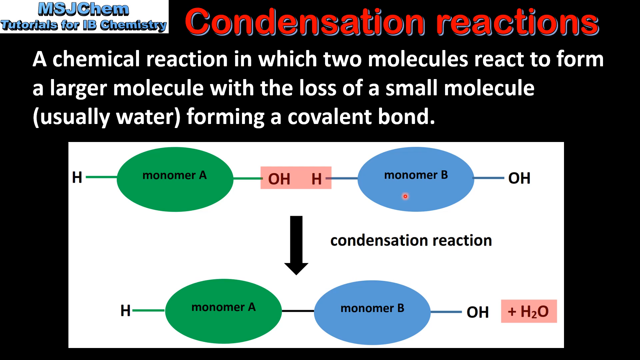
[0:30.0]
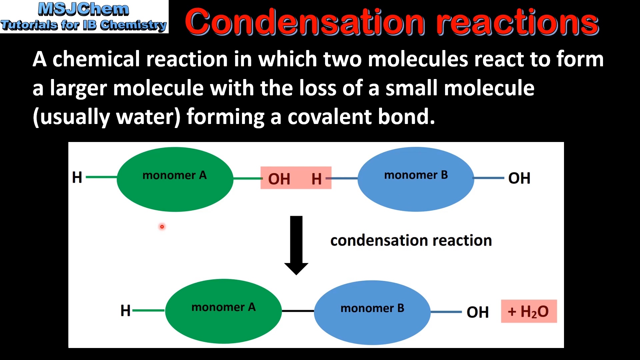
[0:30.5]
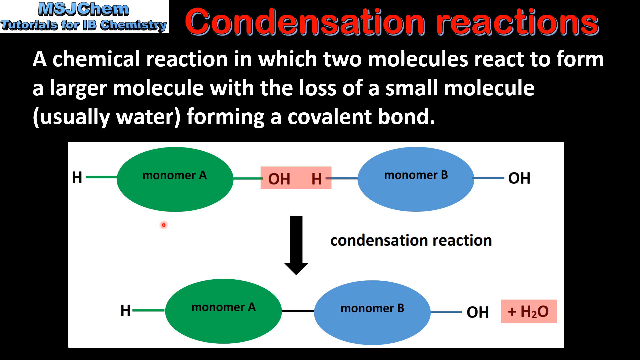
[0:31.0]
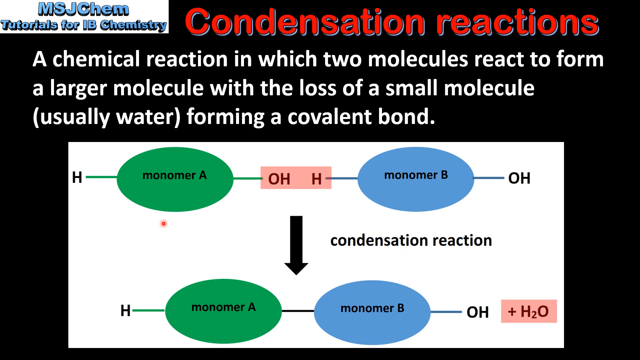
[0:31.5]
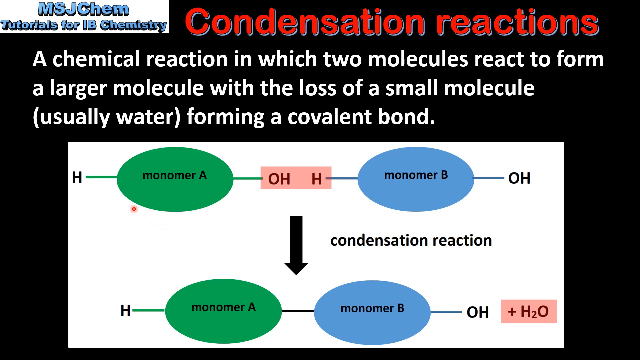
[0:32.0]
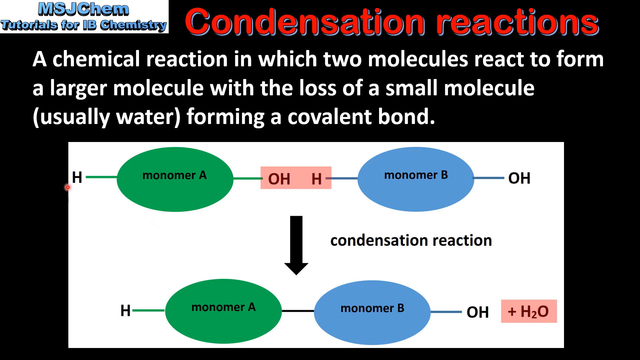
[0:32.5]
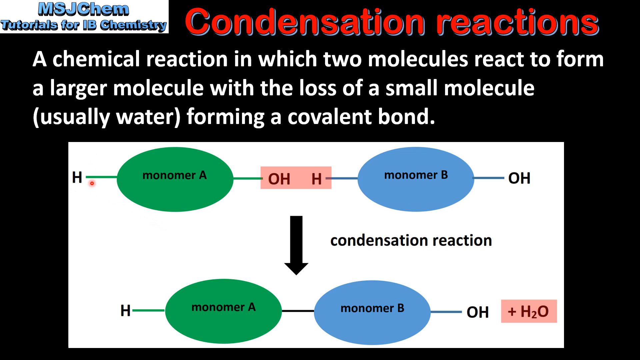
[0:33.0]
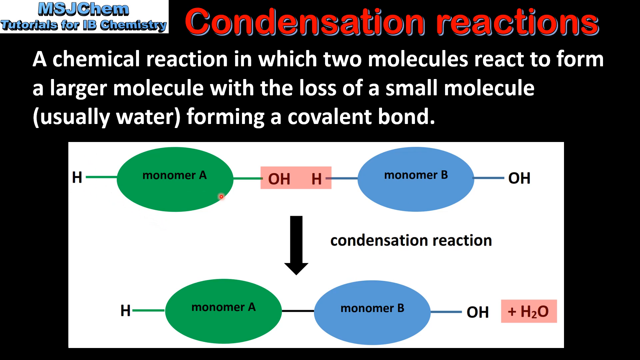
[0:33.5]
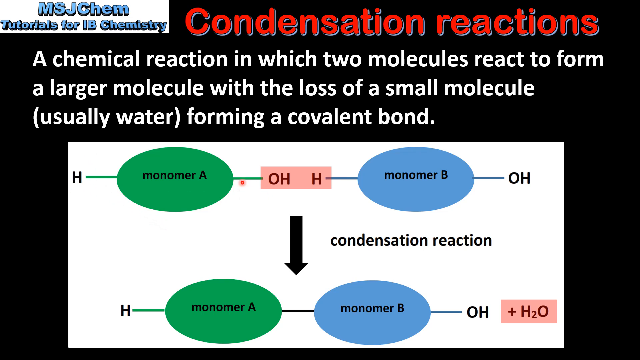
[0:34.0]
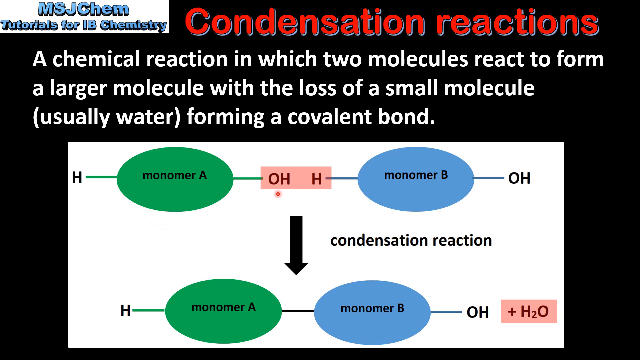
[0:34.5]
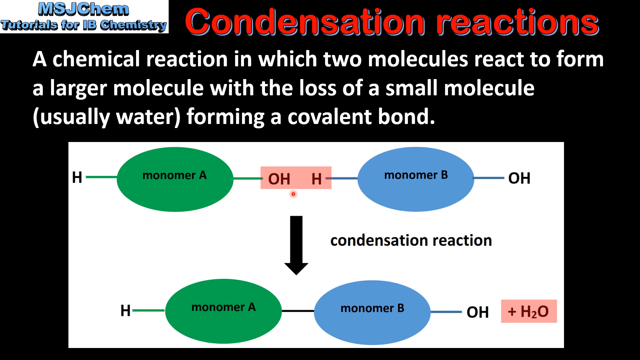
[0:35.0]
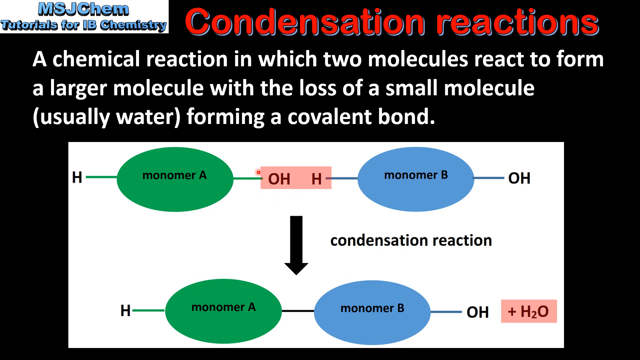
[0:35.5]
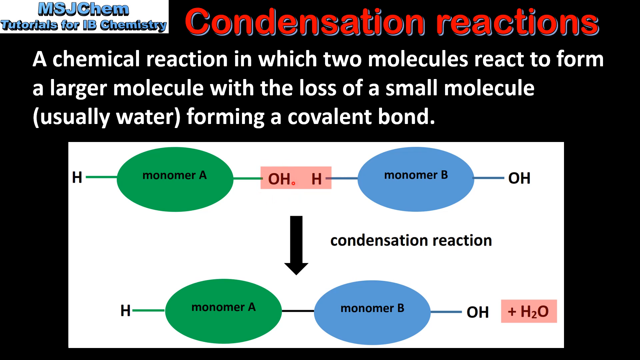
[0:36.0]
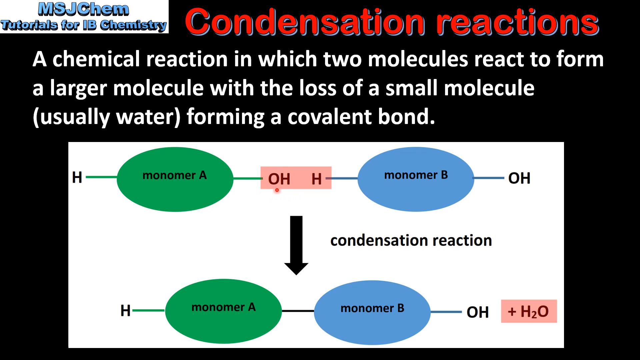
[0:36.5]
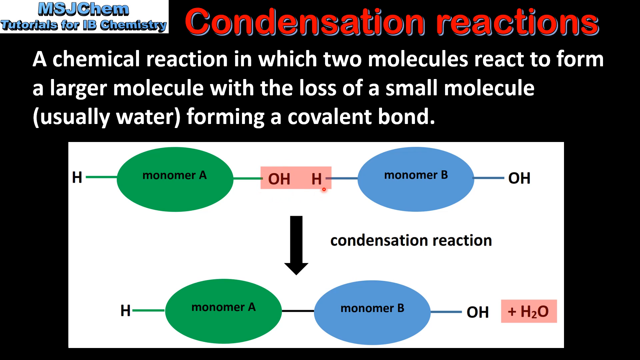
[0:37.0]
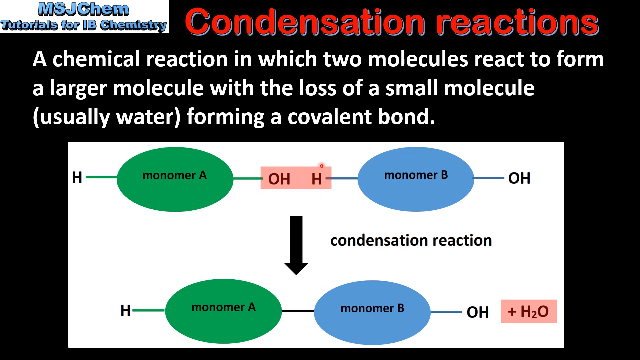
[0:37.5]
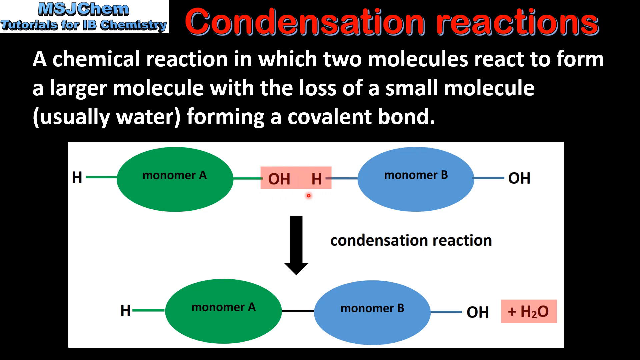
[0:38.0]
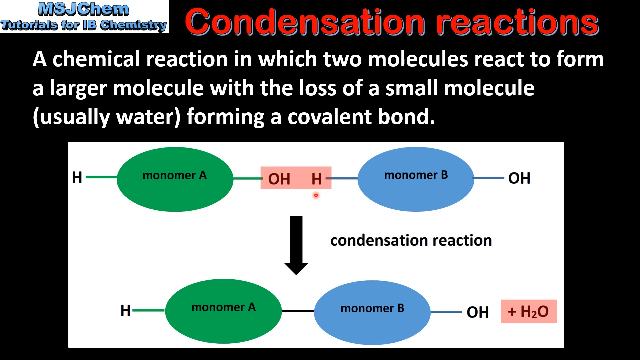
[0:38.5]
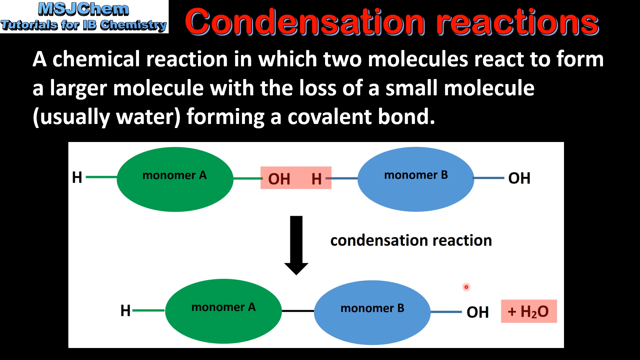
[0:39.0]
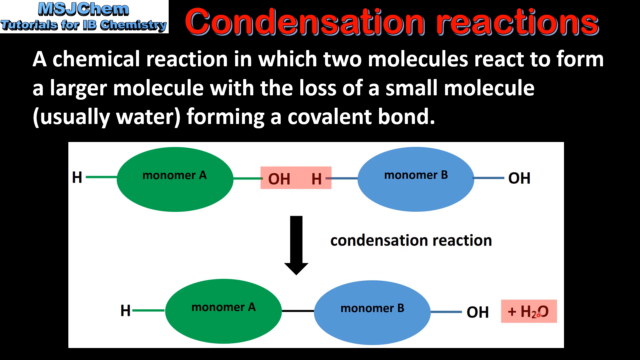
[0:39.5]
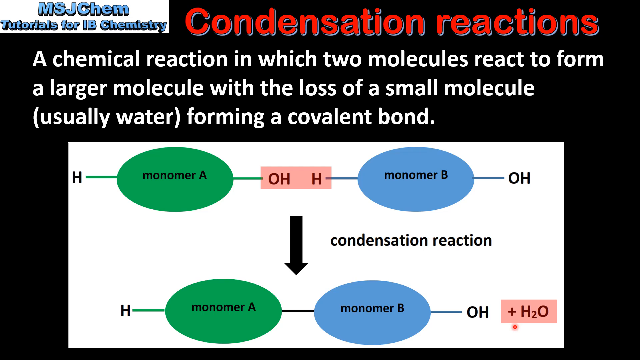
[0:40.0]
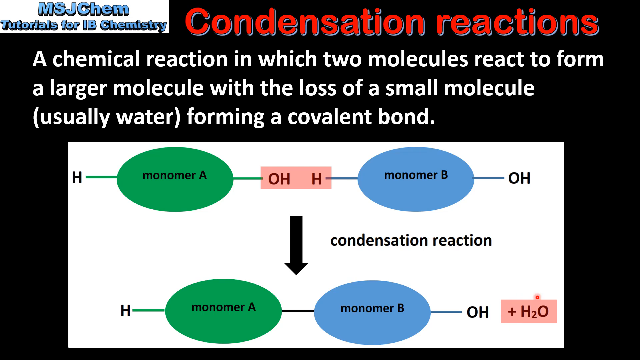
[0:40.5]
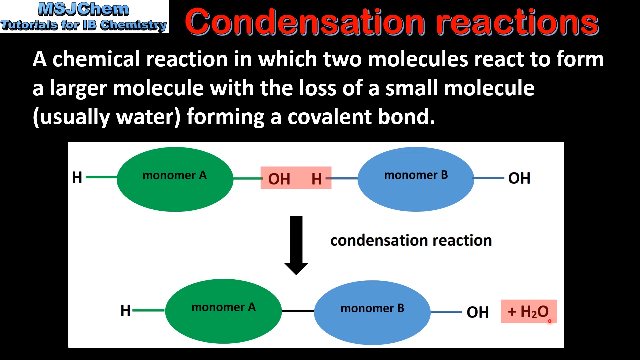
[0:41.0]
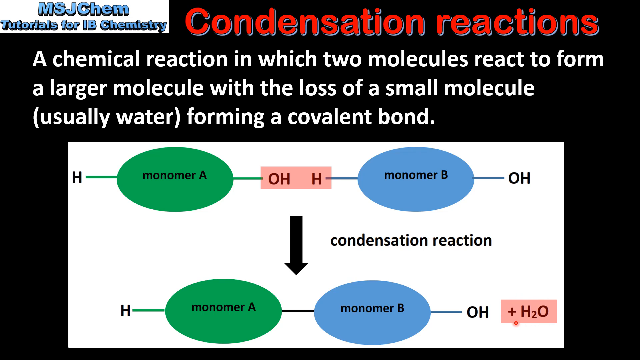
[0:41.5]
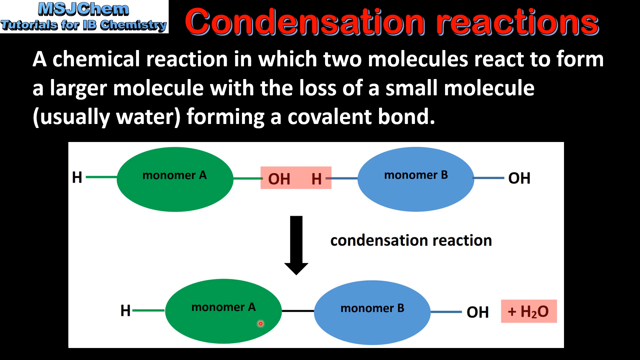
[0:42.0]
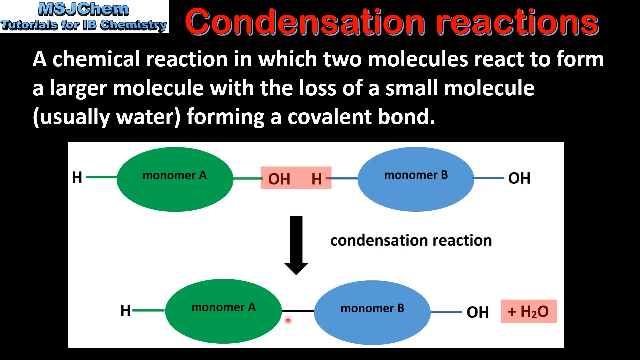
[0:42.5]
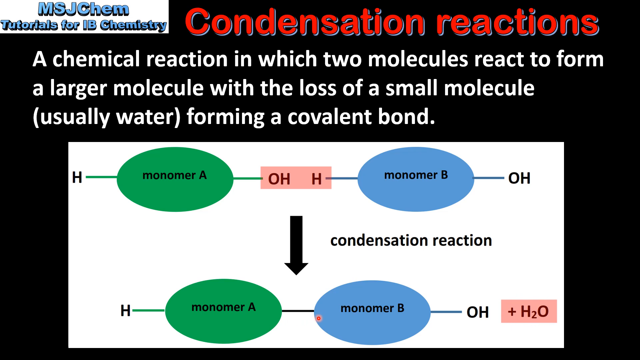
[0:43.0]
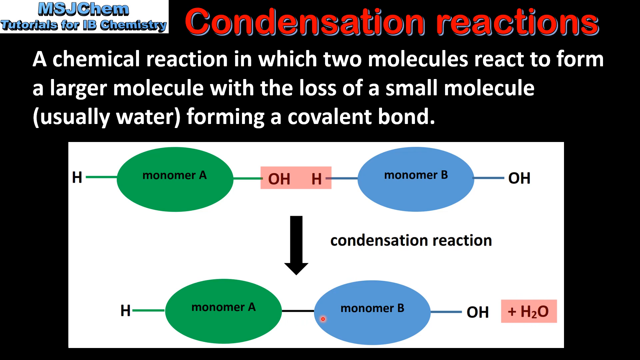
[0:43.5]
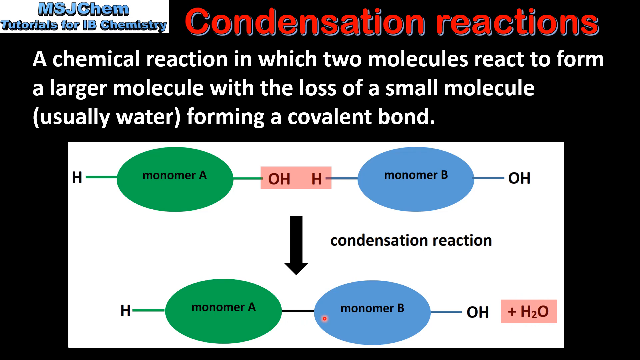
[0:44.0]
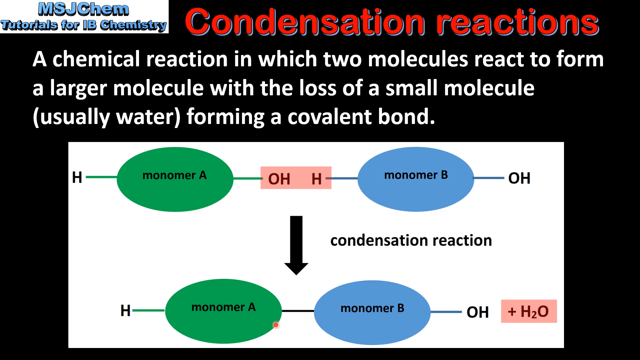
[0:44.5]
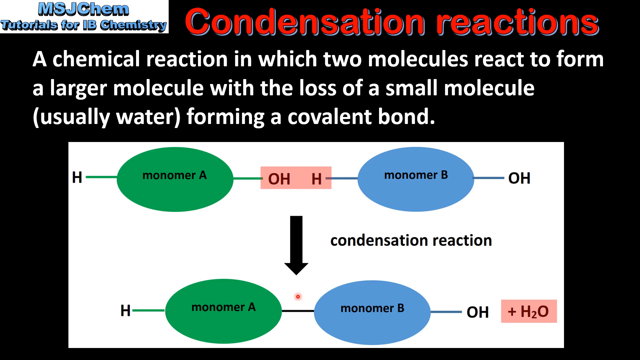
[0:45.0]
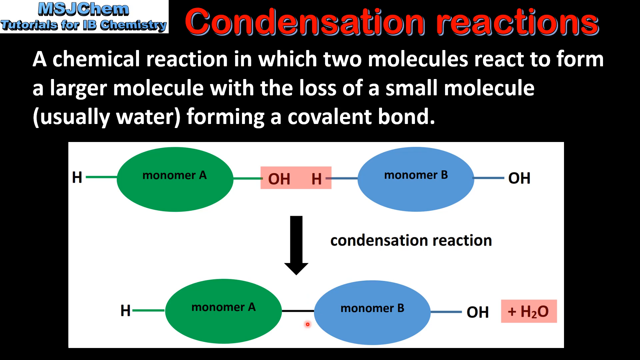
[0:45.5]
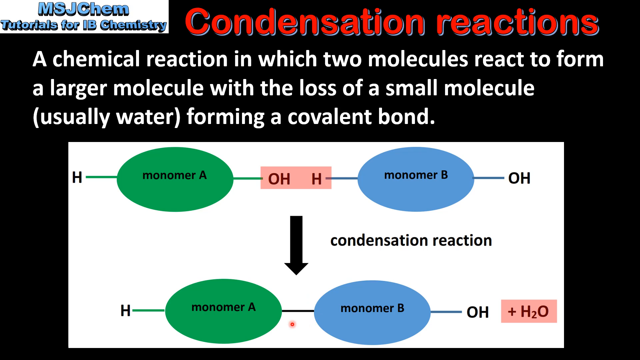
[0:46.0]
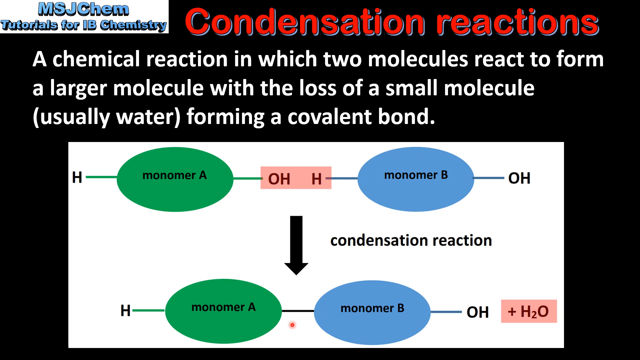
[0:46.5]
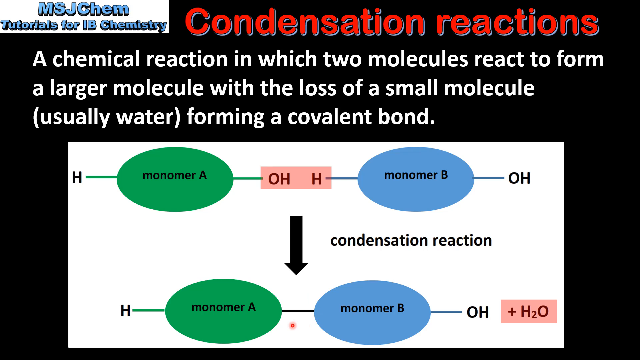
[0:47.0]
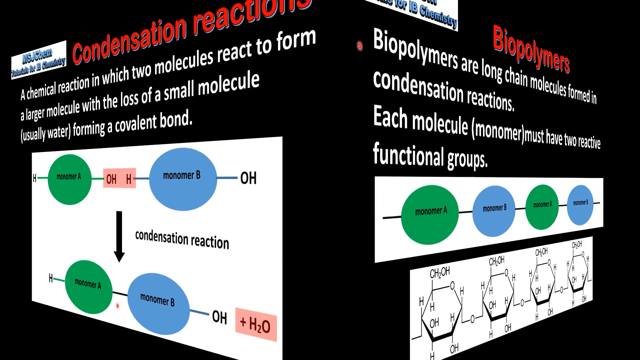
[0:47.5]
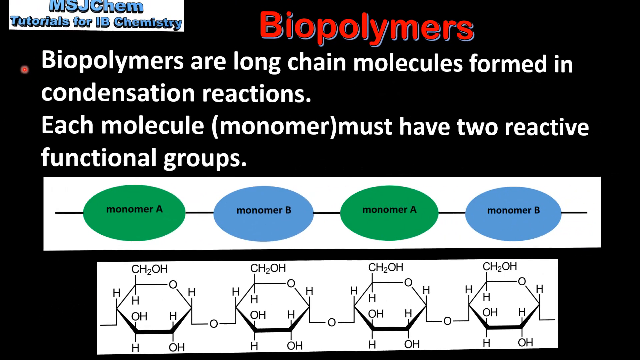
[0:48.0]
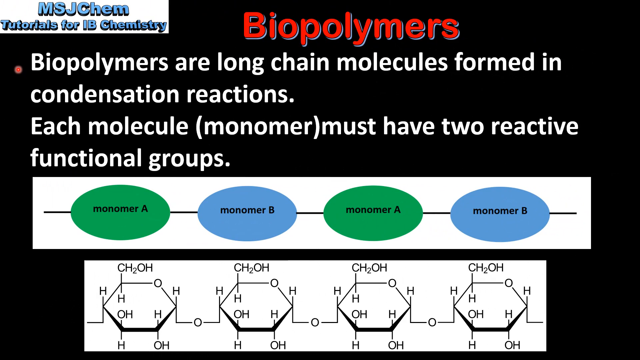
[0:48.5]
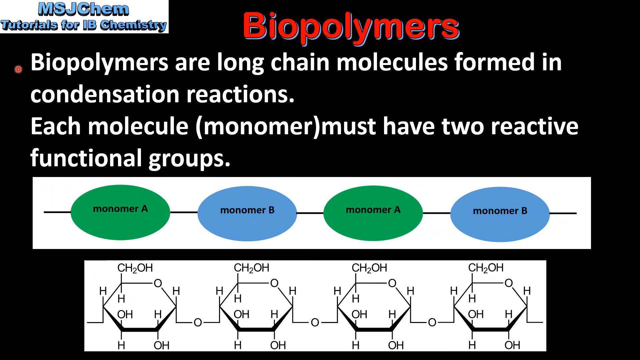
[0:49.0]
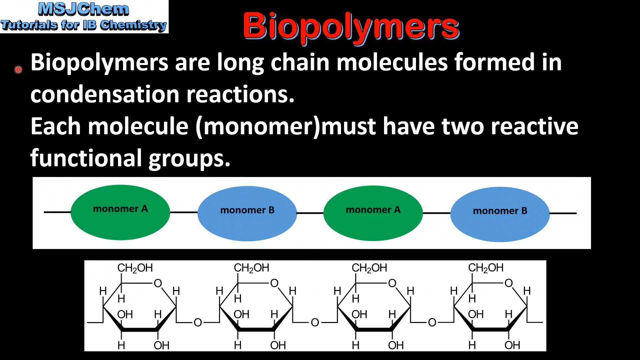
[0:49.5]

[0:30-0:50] On a black background, a white banner at the top left corner has blue text reading "MSJ chem tutorials for IB chemistry," with red text next to it reading "condensation reactions" and a paragraph of white text reading "a chemical reaction in which two molecules react to form a larger molecule with the loss of a small molecule usually water forming a covalent bond." A white banner box contains green and blue circles and pink boxes, with black text labels throughout reading "H monomer A OH H monomer B OH H monomer A monomer B OH plus H2O," and a black arrow pointing down is labeled in black text "condensation reaction." A small red circular mouse pointer moves around the screen, pointing to different elements of the page. The screen then seems to spin towards the next page: a black background with red text reading "biopolymers" and a white banner at the top left reading "MSJ Chem Tutorials for IB Chemistry." White text reads "biopolymers are long chain molecules formed in condensation reactions. Each molecule monomer must have two reactive functional groups." A very long white box contains green and blue circles labeled "monomer A," "monomer B," "monomer A," and "monomer B," with a line connecting all four. Another white box contains text that repeats throughout, such as "CH2OH," "HHOH," "HO," and "HOH."